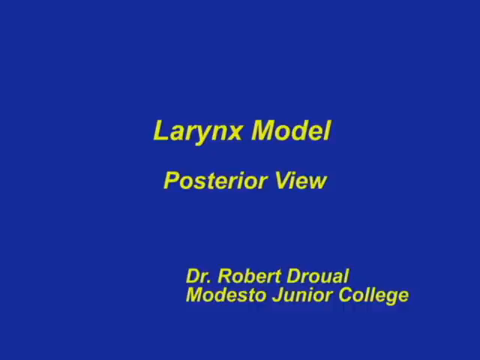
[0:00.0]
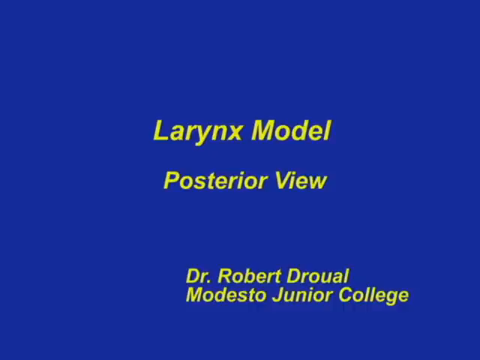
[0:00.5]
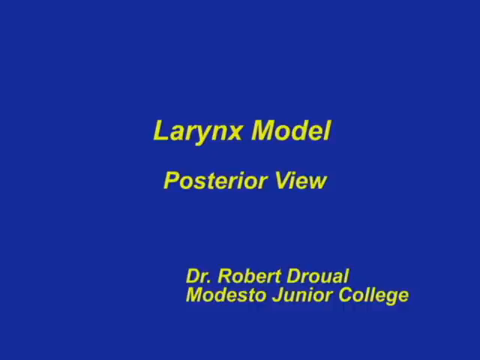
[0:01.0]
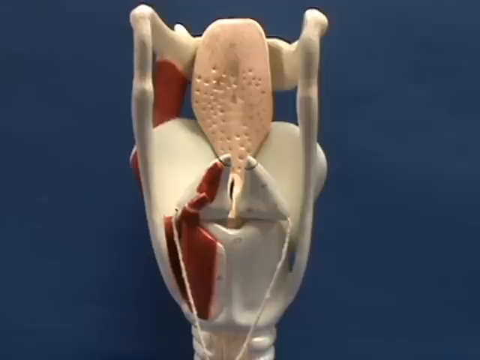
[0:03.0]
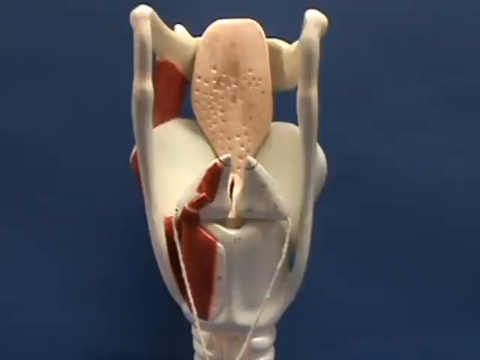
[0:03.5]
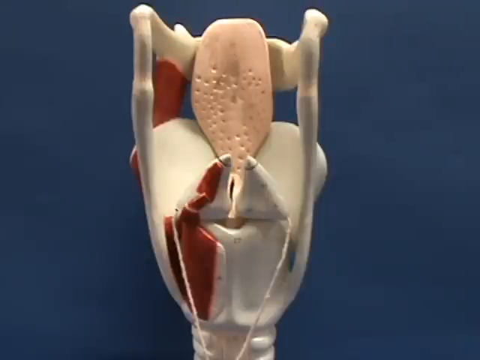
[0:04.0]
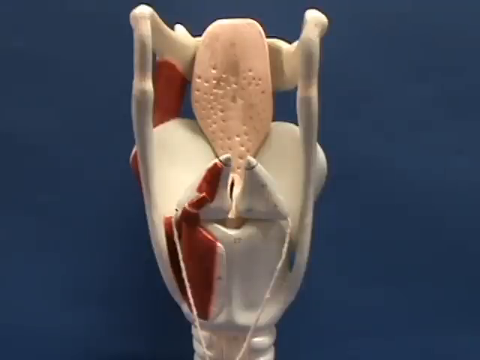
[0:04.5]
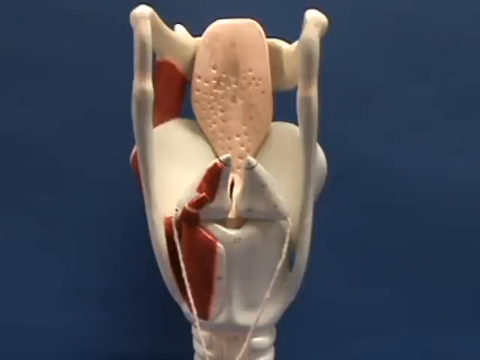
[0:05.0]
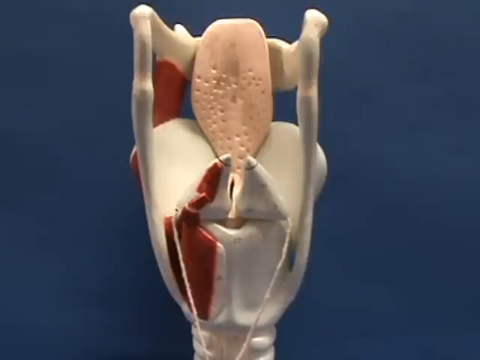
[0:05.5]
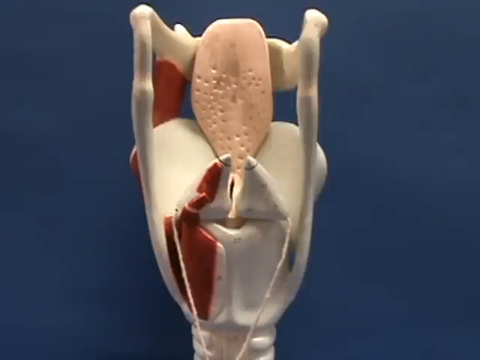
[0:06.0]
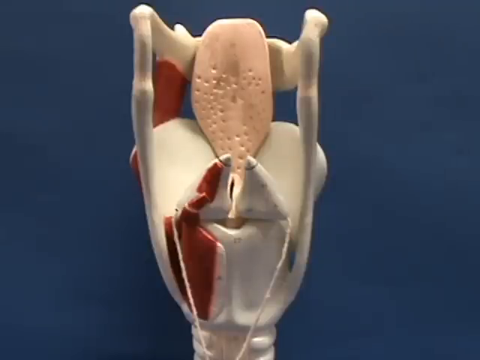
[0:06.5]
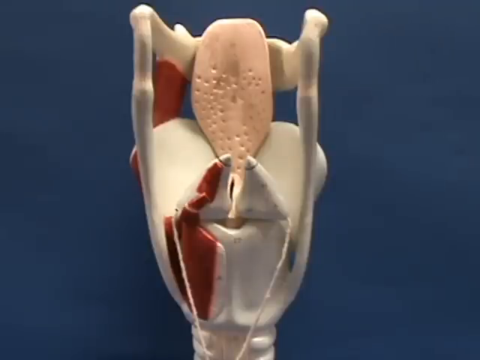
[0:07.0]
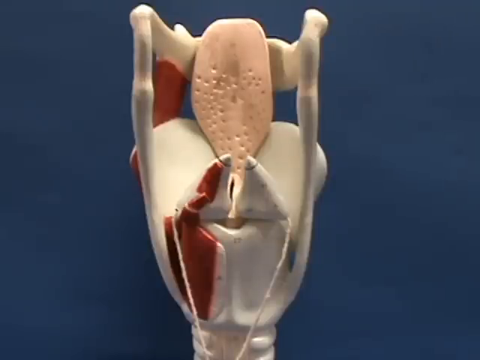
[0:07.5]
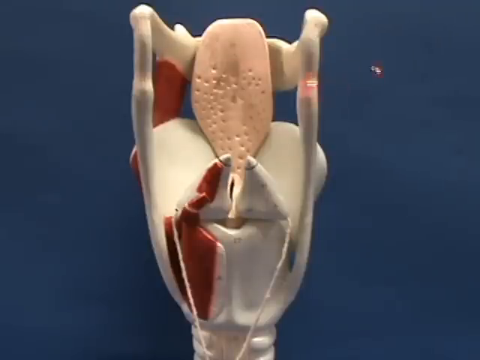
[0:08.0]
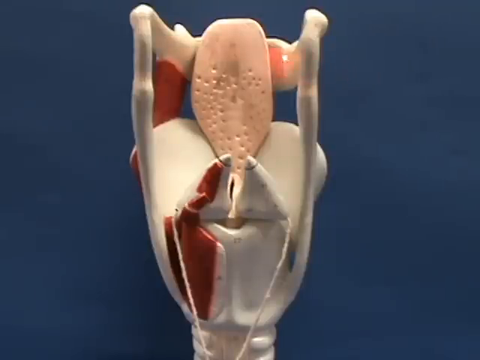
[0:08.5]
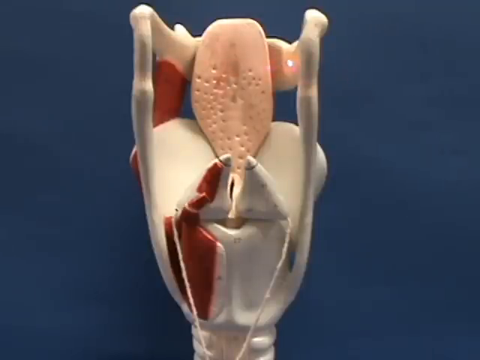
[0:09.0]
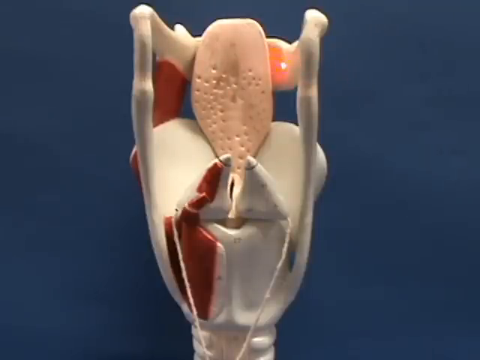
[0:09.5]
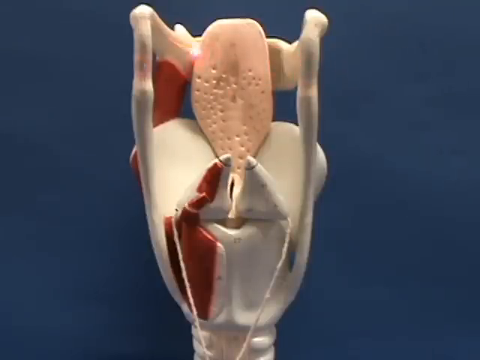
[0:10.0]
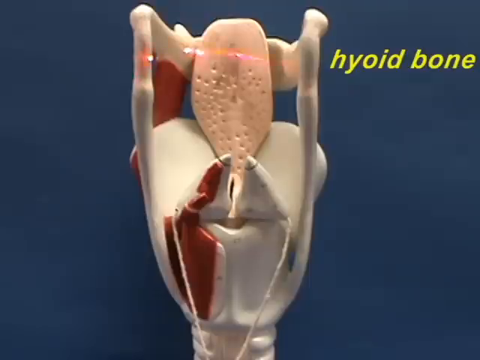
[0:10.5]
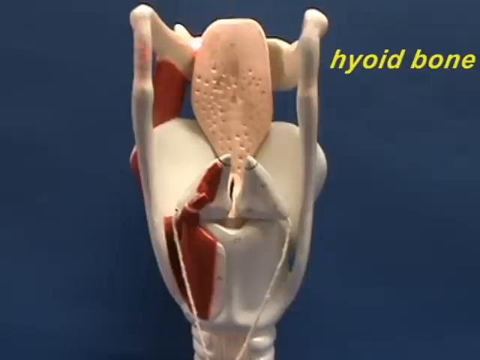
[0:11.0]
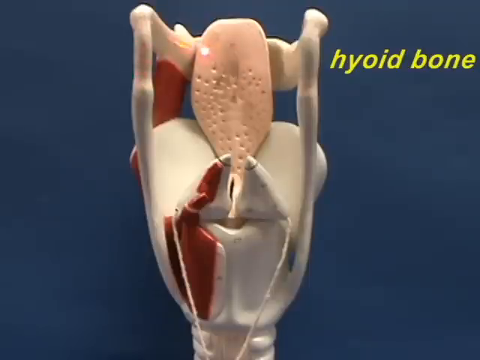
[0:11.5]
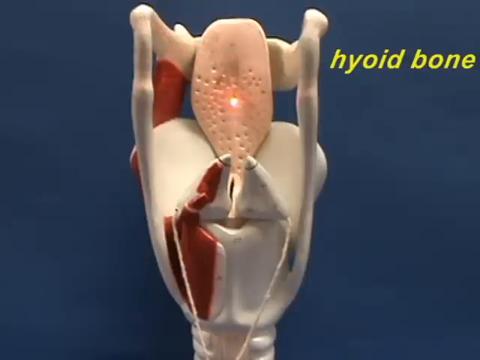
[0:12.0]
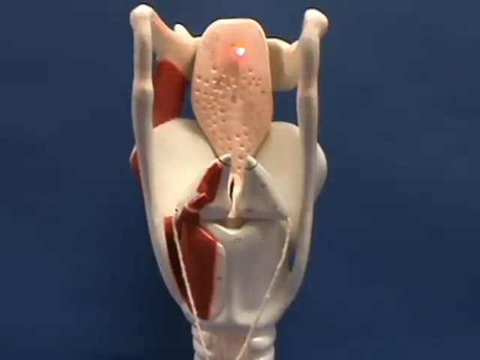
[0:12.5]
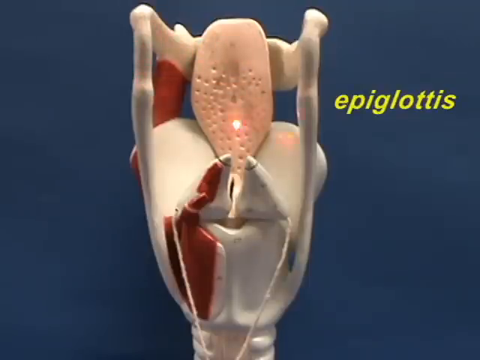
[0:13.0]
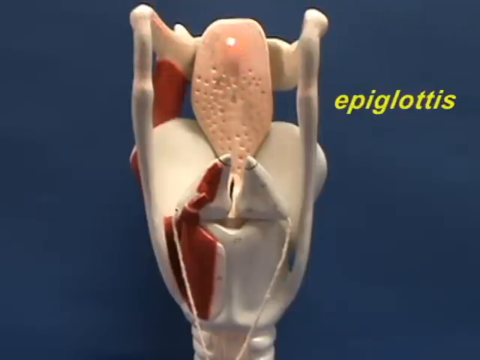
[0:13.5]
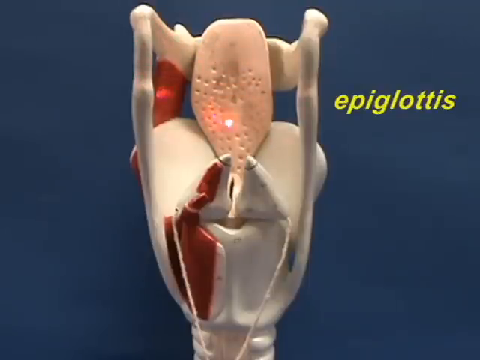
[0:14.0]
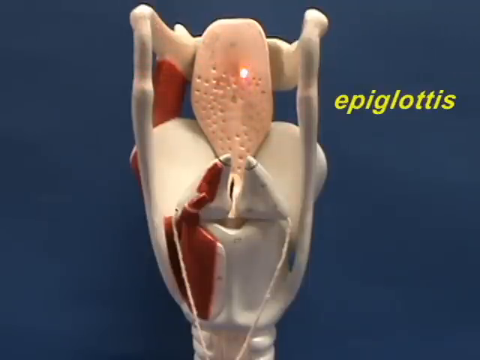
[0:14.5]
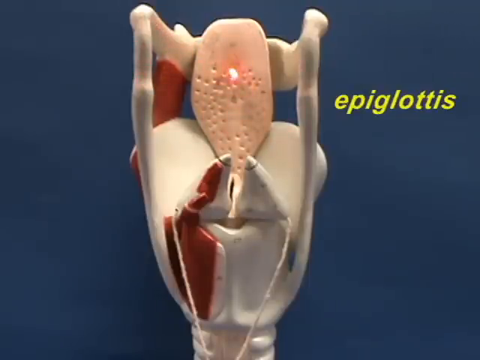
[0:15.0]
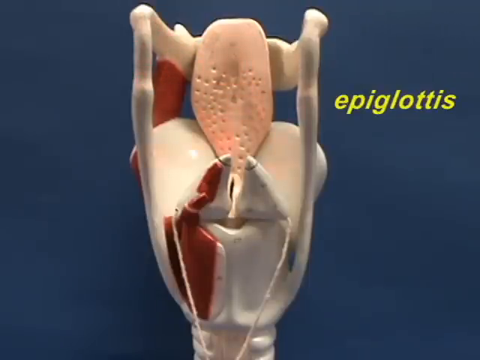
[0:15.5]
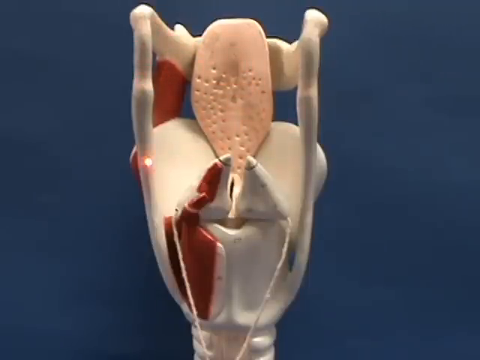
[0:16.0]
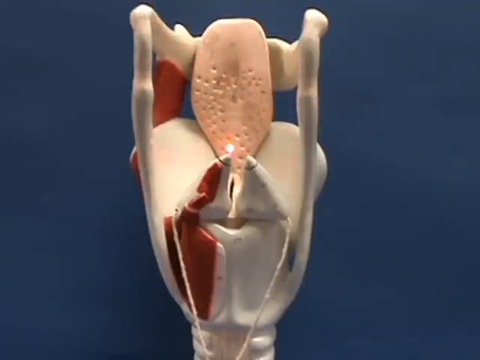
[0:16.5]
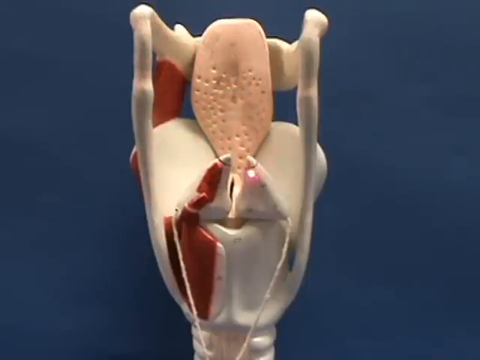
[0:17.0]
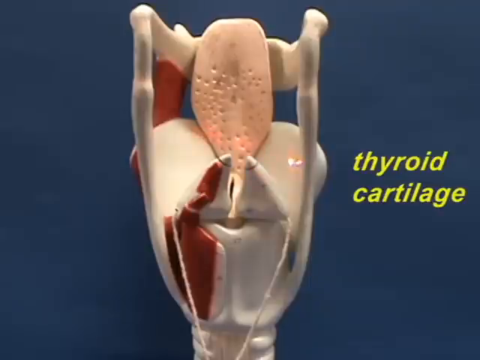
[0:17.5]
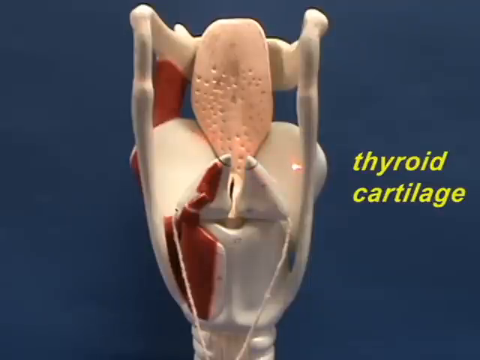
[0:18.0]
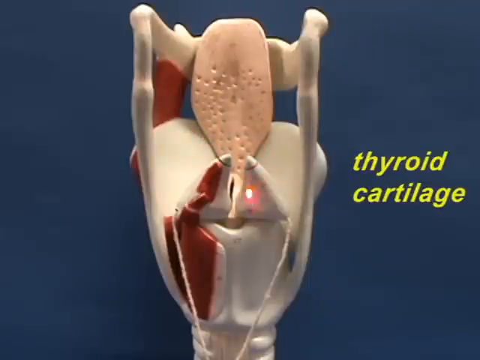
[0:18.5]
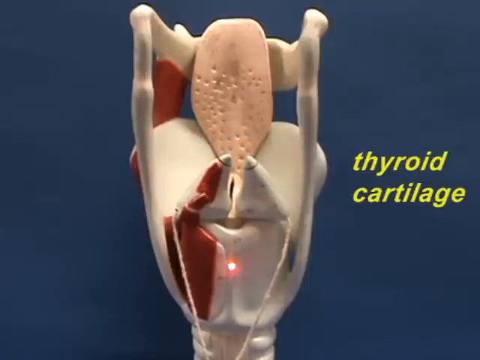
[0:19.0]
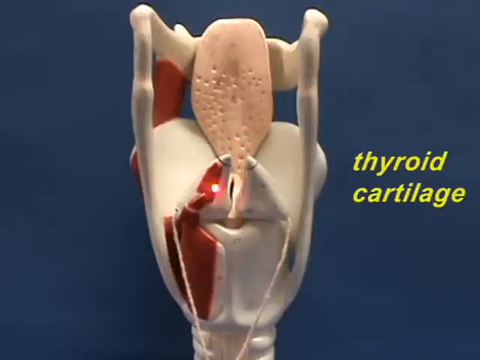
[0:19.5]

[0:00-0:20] The screen is solid dark blue. In the middle, written in fluorescent green, is "LARYNX MODEL," and underneath it "POSTERIOR VIEW." Along the bottom of the screen it says "Dr. Robert Gioia, D-R-O-U-A-L, Modesto Junior College." The video then cuts to a darker blue screen with a model of a body part in which two bones can be made out. Someone with a laser pointer points the laser at different parts of the model. He points at the top bone, and "hyoid bone" pops up in fluorescent green to the right of the model. He then puts the laser pointer on a light pink part, and "Epiglottis" appears off to the right in green. Next he points underneath that pink area onto a white part, and "thyroid cartilage" pops up in green to the right of the model.